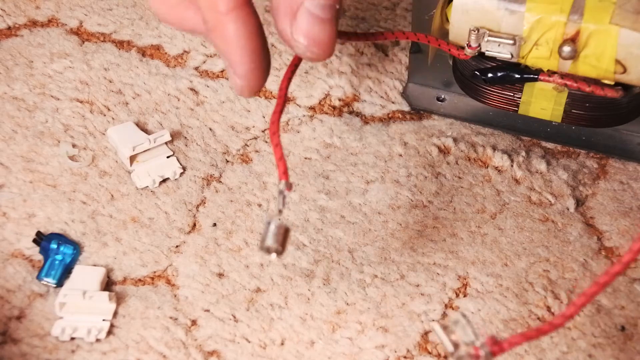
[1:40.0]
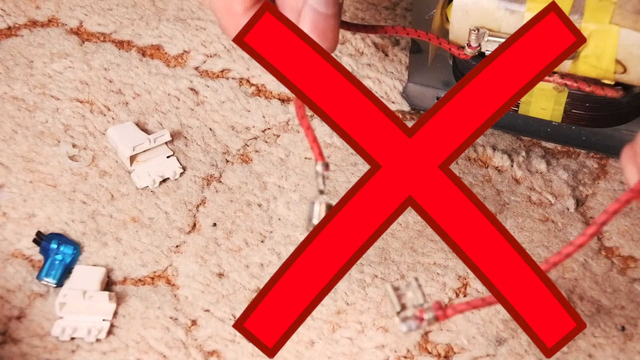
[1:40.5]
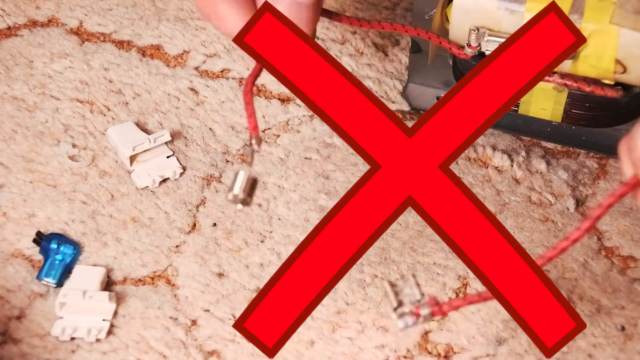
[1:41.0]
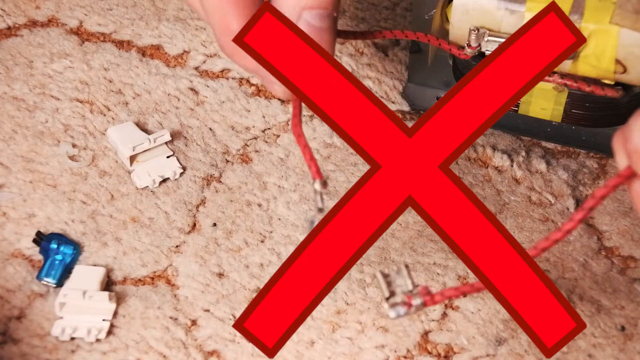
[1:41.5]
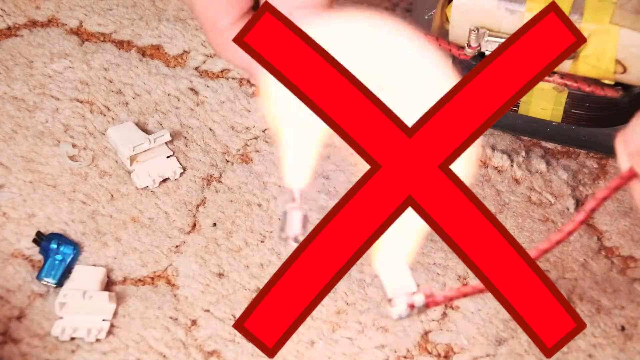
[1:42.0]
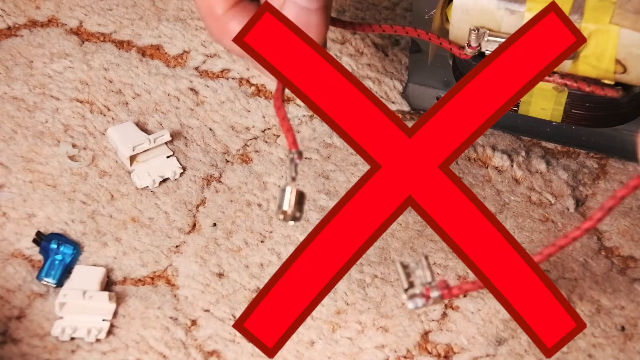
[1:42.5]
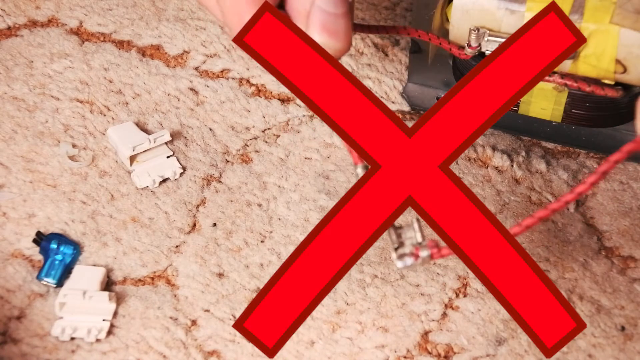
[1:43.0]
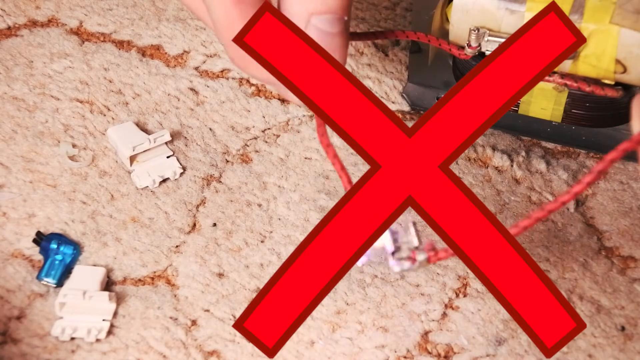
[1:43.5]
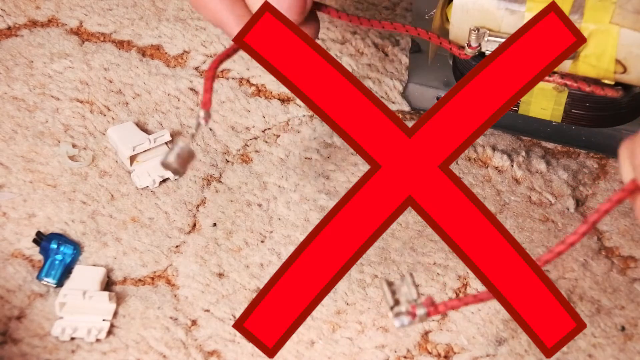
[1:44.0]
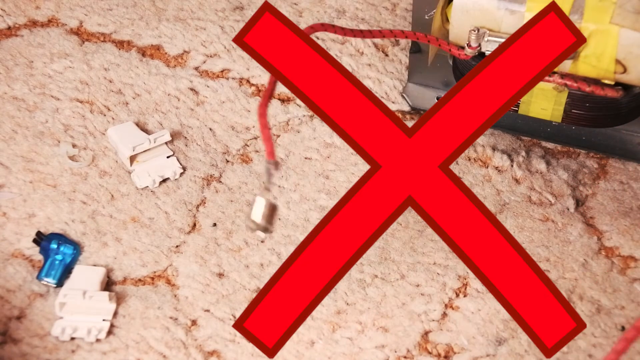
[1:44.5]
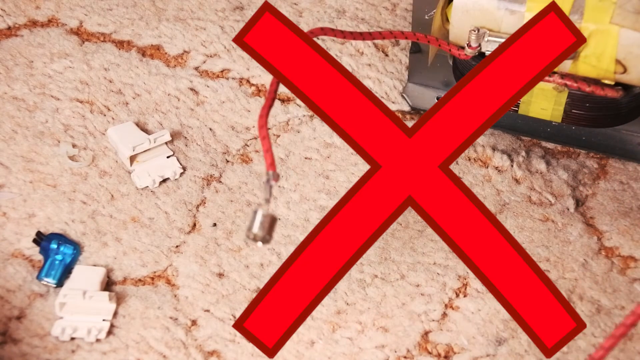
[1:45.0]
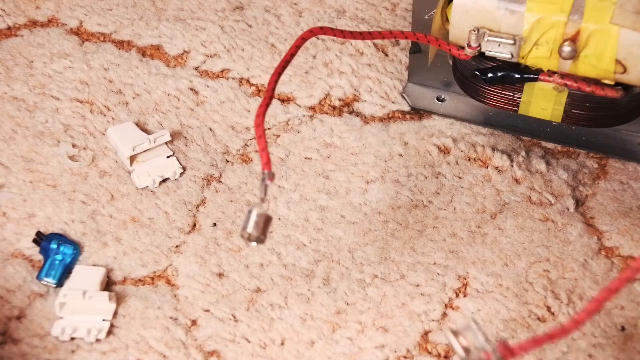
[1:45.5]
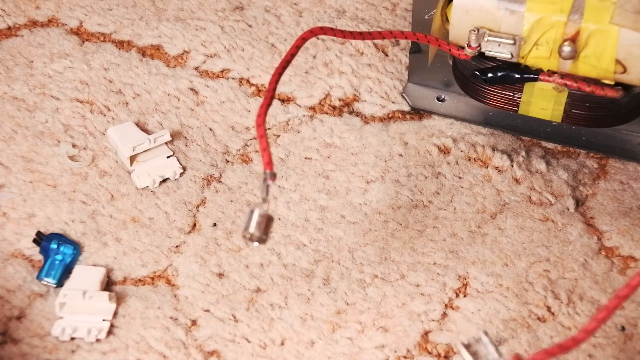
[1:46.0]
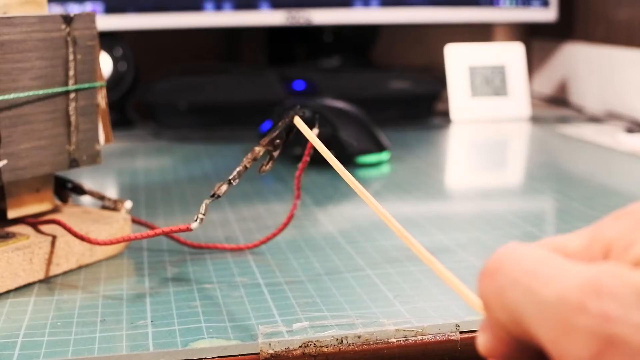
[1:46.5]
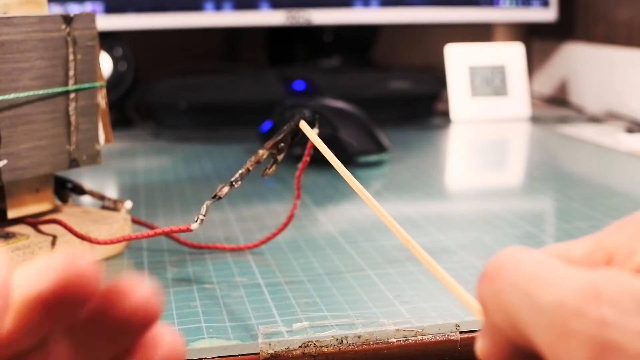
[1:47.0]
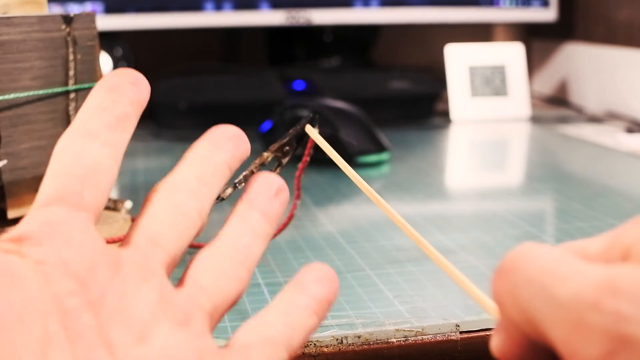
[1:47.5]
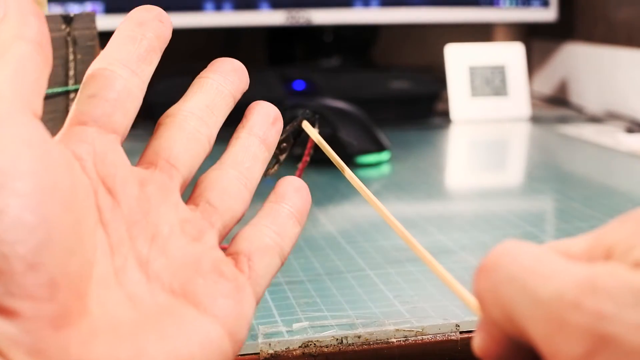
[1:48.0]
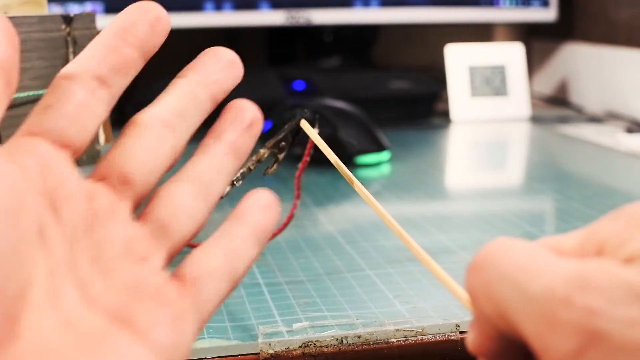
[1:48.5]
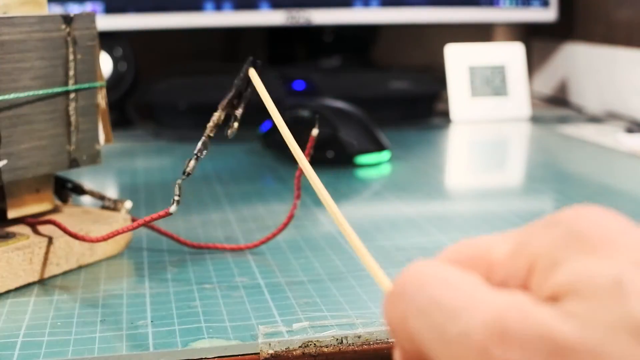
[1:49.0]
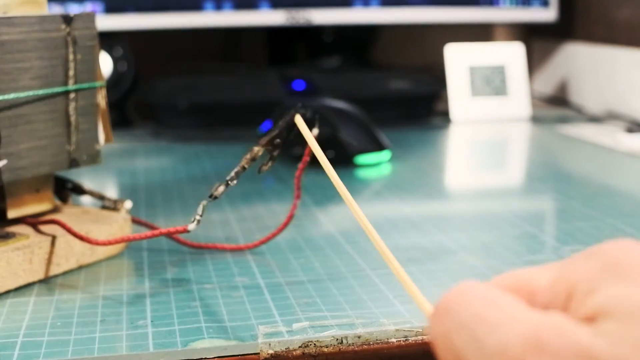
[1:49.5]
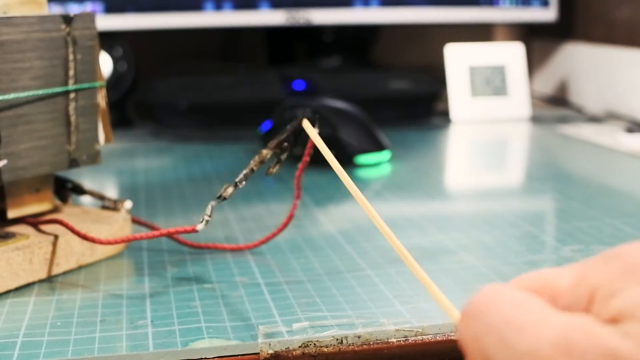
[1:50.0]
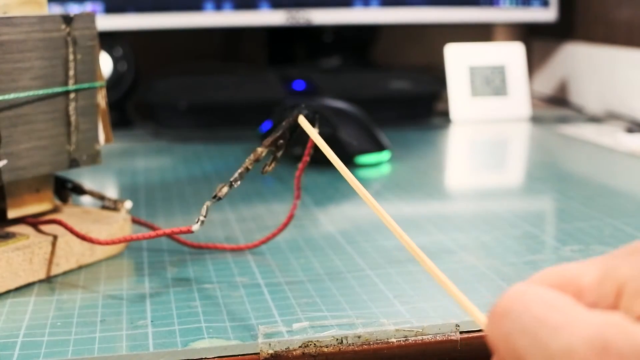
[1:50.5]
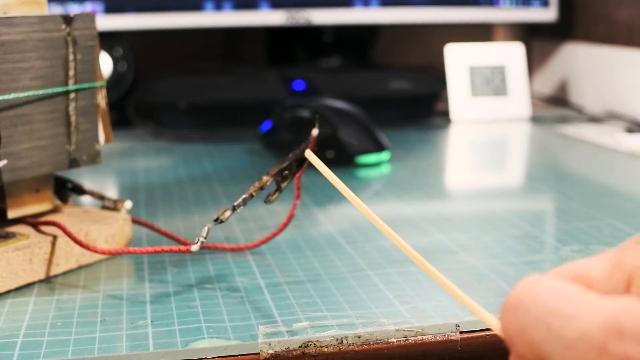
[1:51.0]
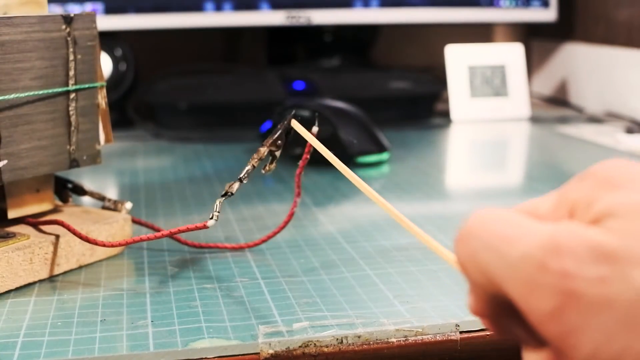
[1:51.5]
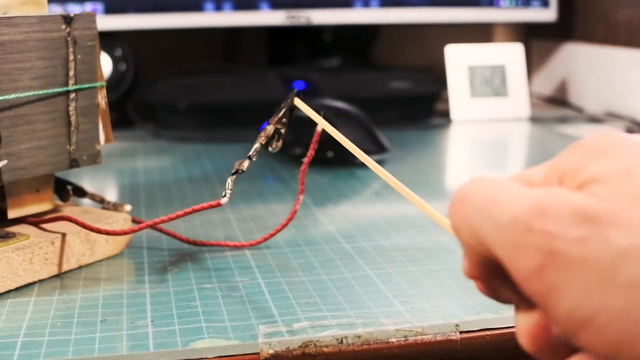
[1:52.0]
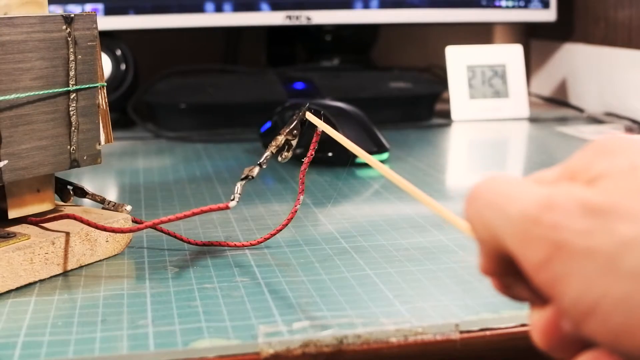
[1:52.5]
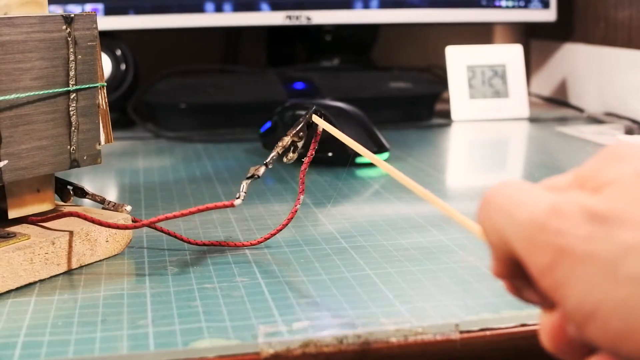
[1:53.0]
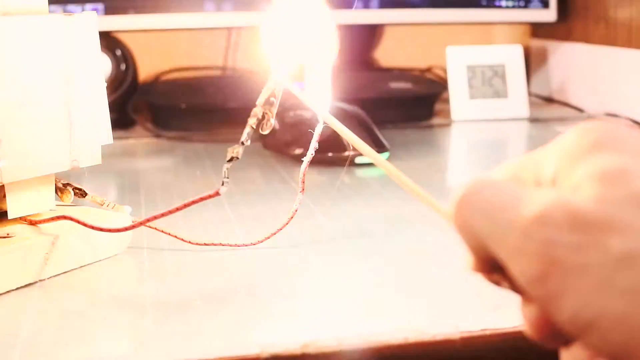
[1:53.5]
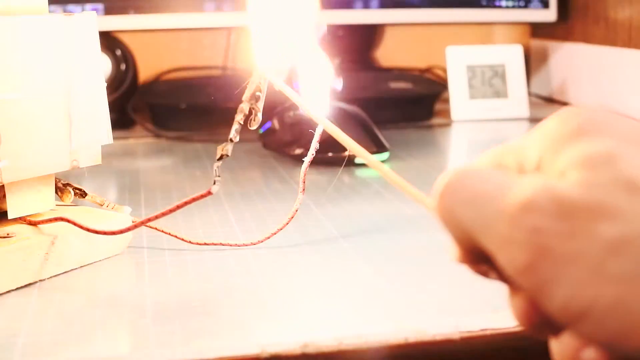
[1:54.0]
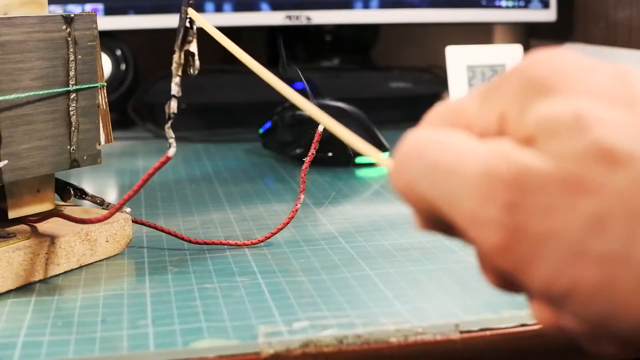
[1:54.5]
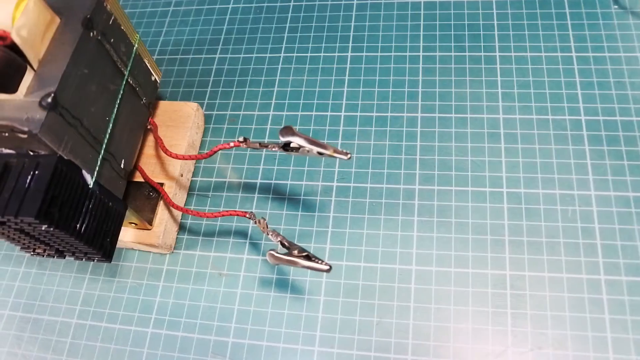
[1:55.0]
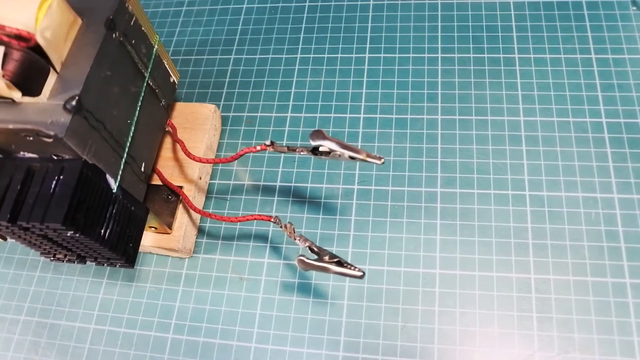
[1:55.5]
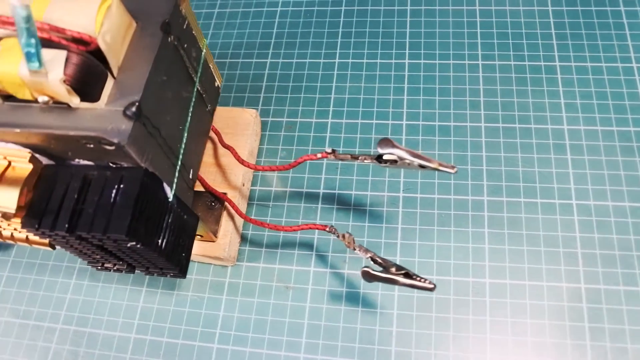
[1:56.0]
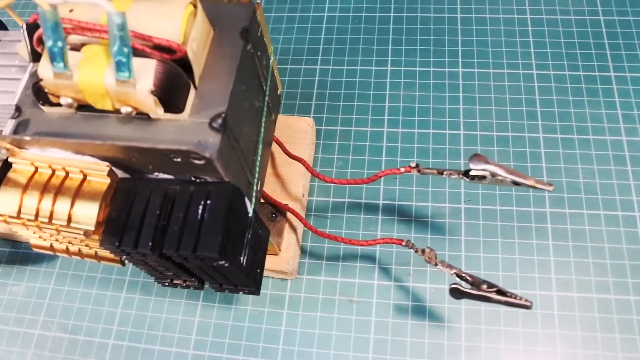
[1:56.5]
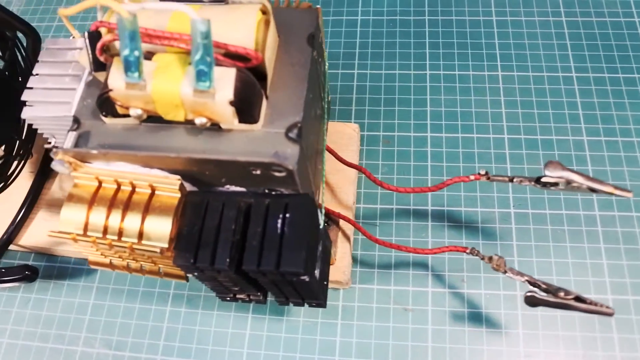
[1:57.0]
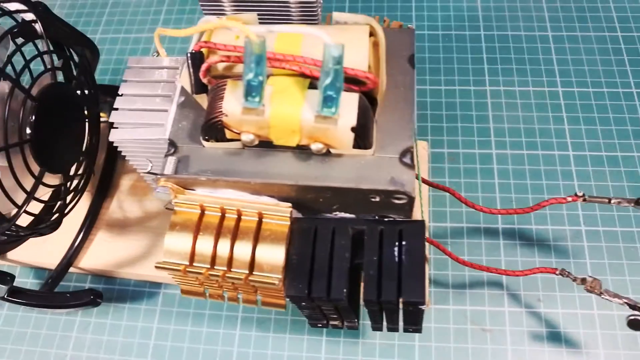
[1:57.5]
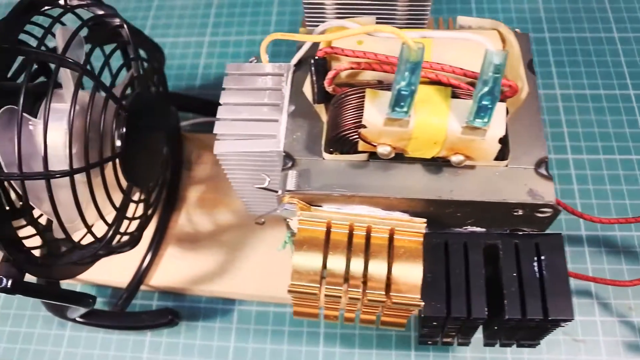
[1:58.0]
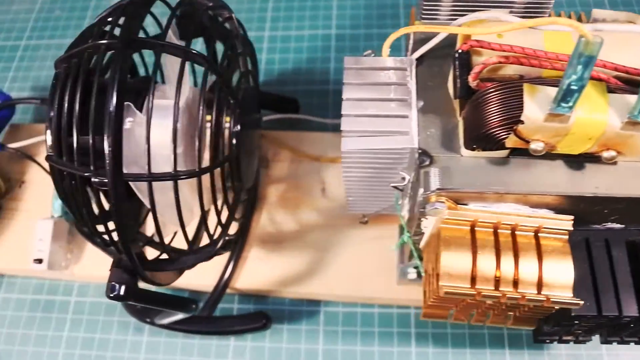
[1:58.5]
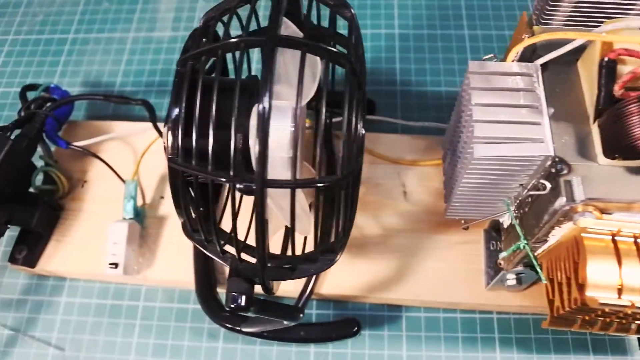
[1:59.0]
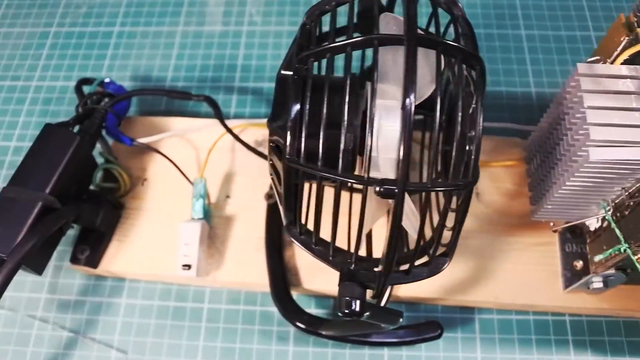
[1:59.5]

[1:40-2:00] A warning says these two components cannot be touched together. They appear to be conductors of electricity that can spark when touched together. The person holds these wires with wood, and the wires have something like hemostat clips on the ends, probably conductors. There is an entire system built with a fan to keep it cooled. The person is always careful not to touch any of the metal pieces with bare hands, holding on to the plastic on the wire instead.